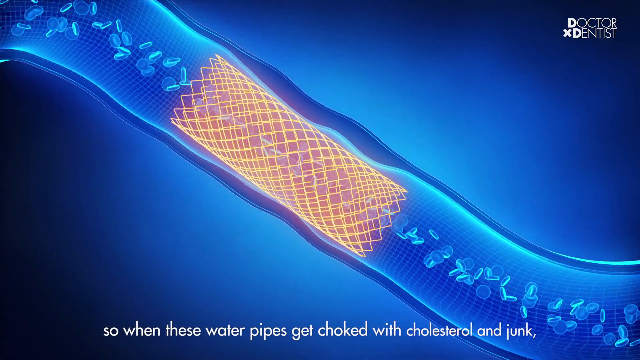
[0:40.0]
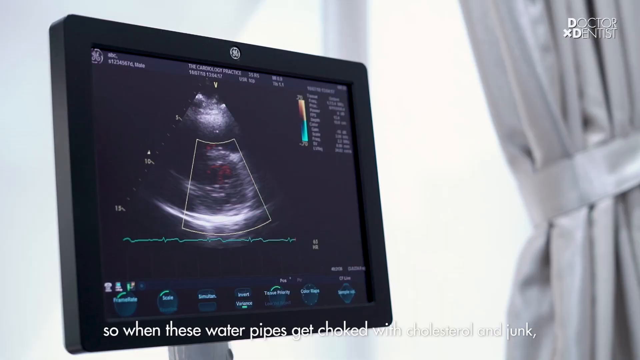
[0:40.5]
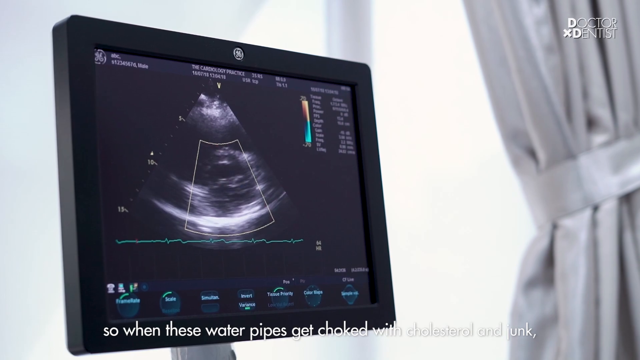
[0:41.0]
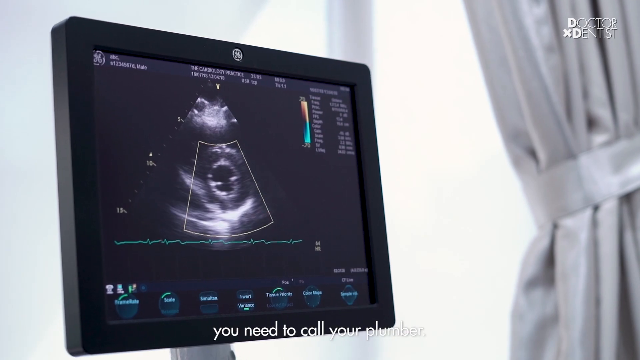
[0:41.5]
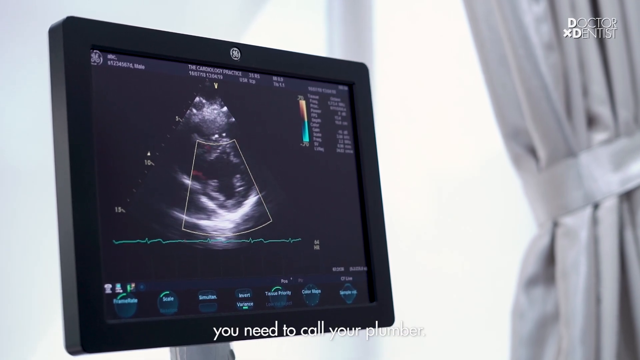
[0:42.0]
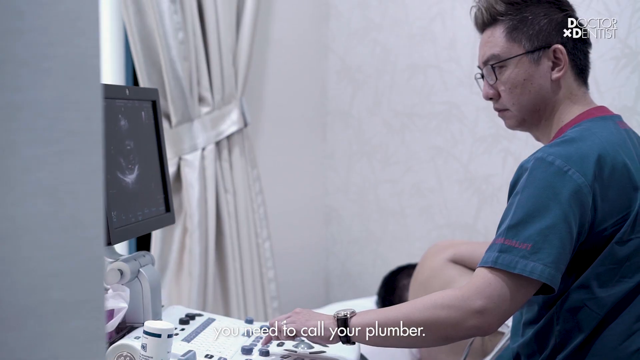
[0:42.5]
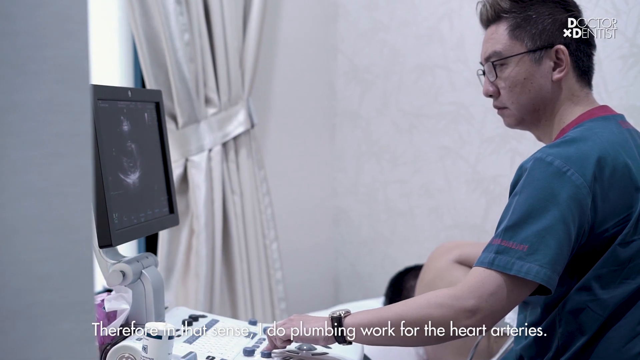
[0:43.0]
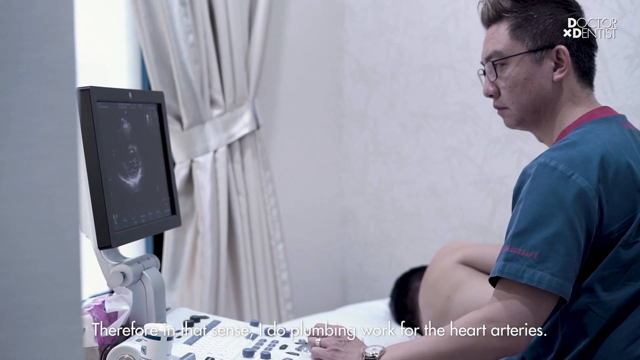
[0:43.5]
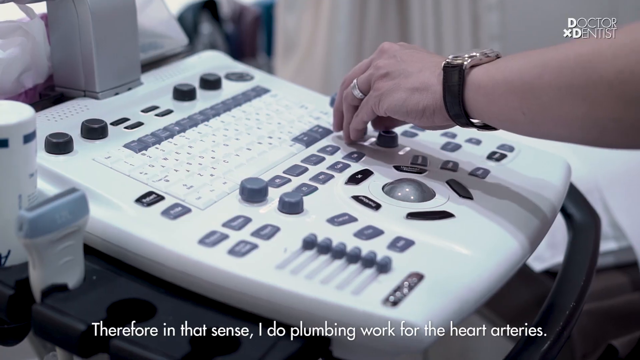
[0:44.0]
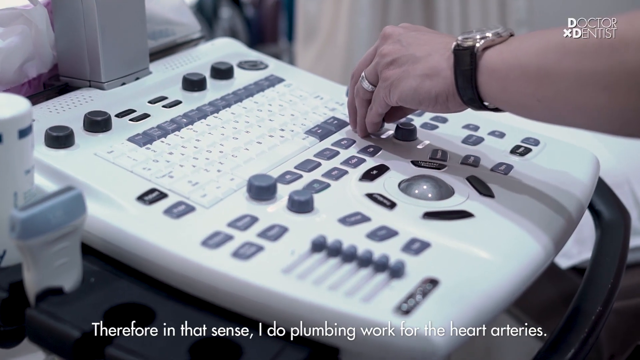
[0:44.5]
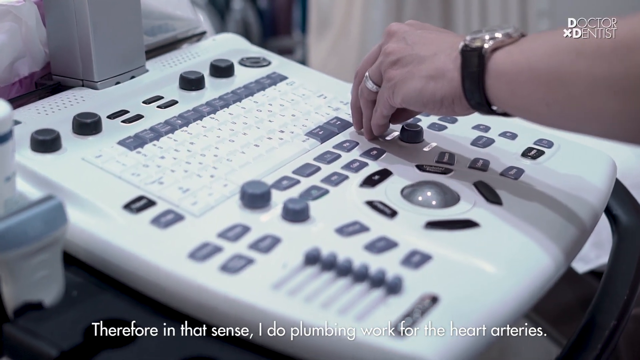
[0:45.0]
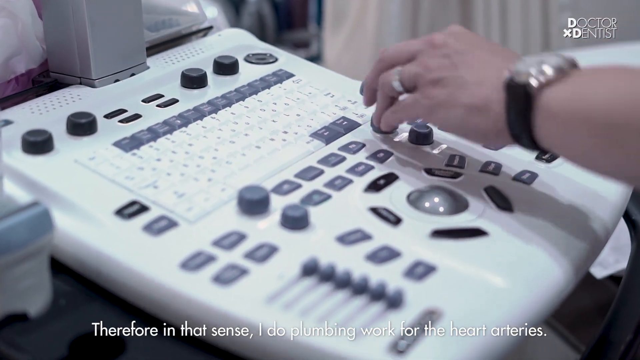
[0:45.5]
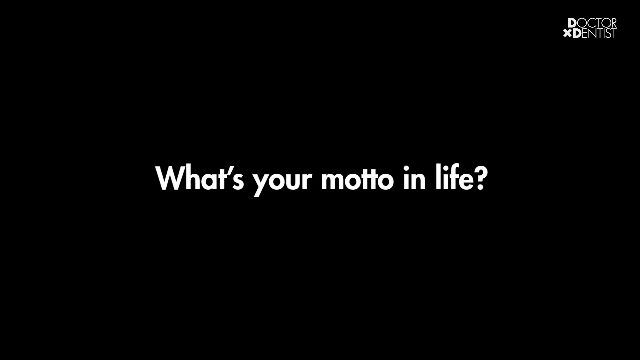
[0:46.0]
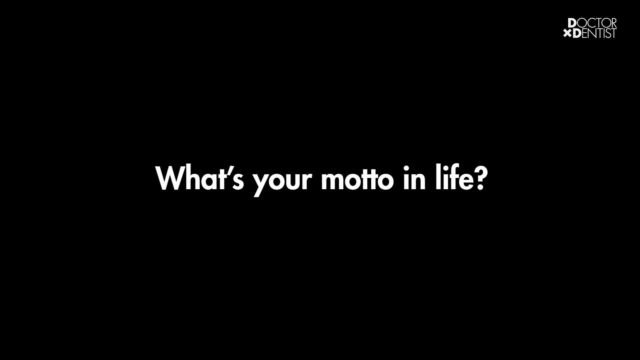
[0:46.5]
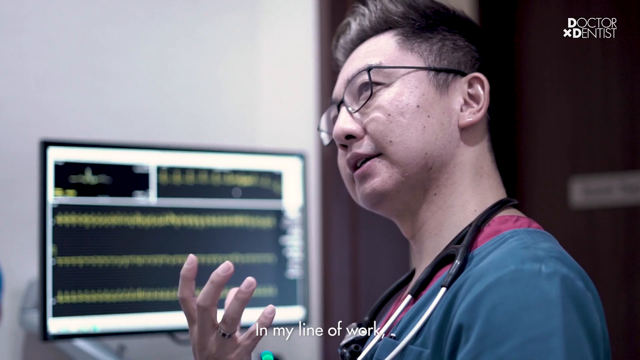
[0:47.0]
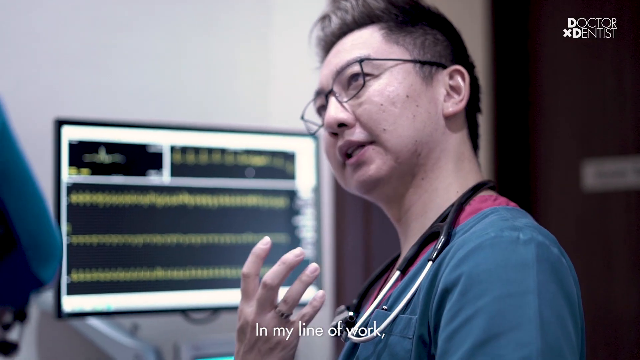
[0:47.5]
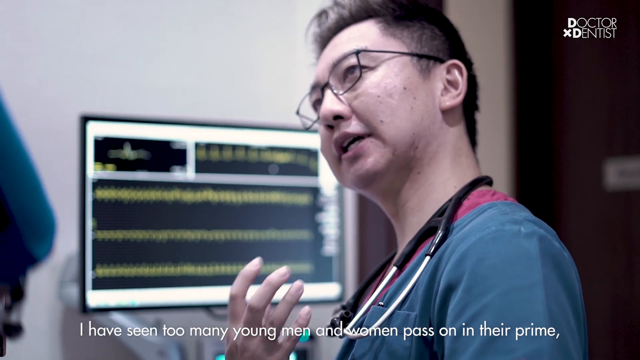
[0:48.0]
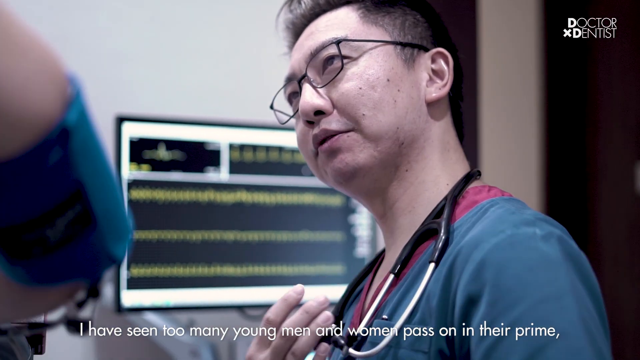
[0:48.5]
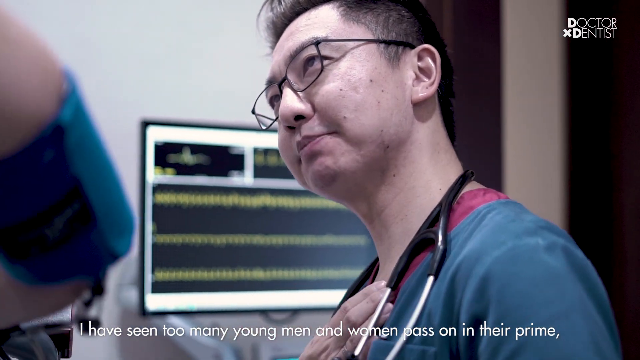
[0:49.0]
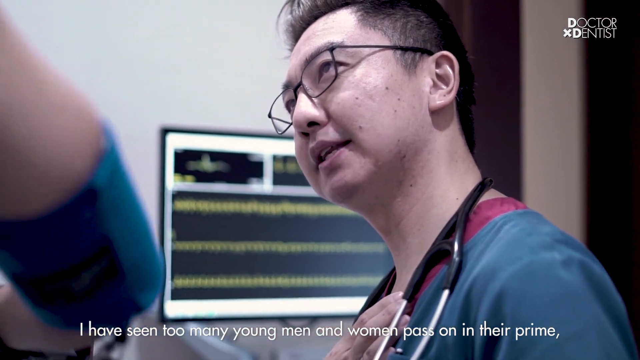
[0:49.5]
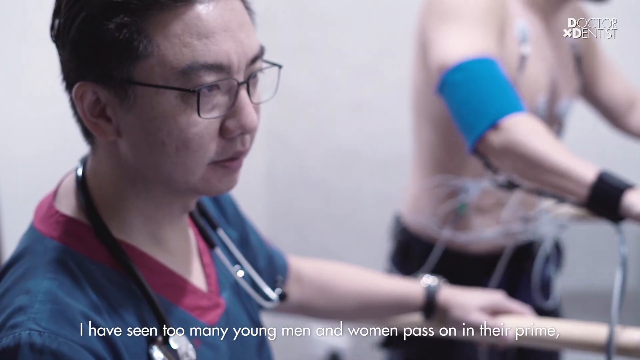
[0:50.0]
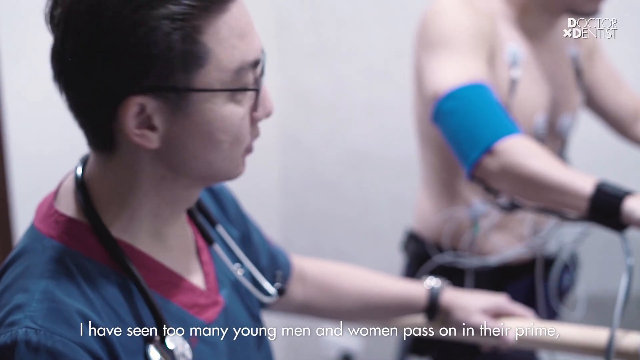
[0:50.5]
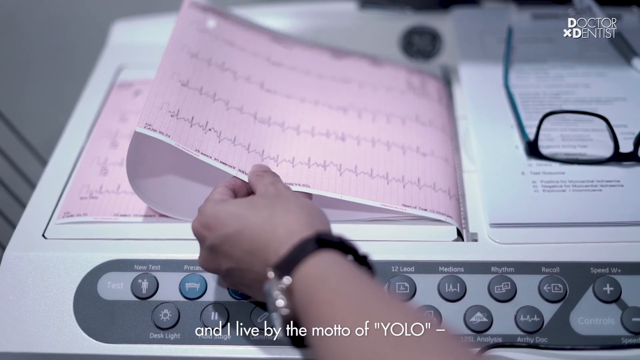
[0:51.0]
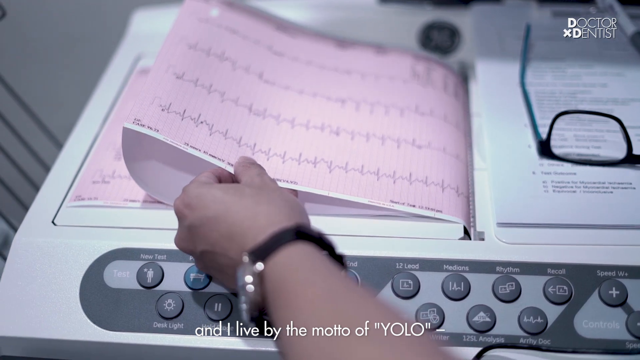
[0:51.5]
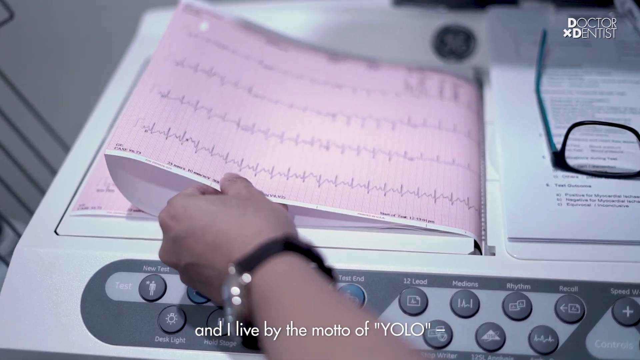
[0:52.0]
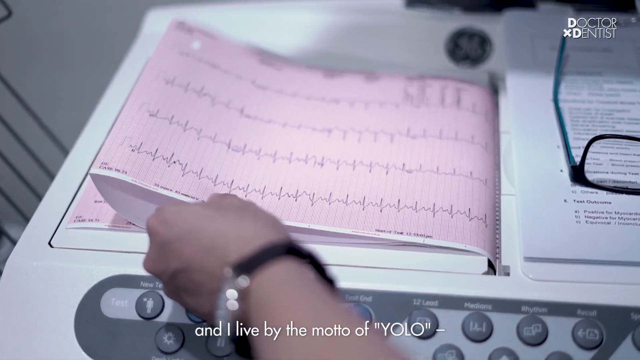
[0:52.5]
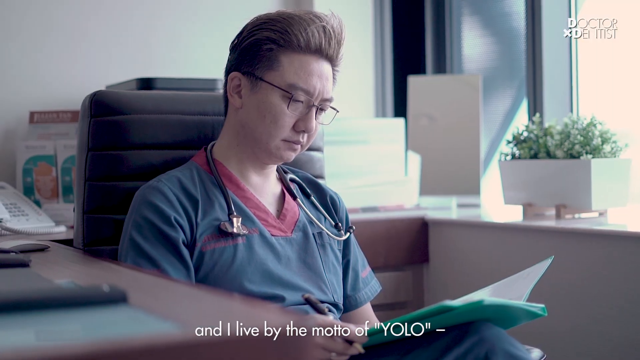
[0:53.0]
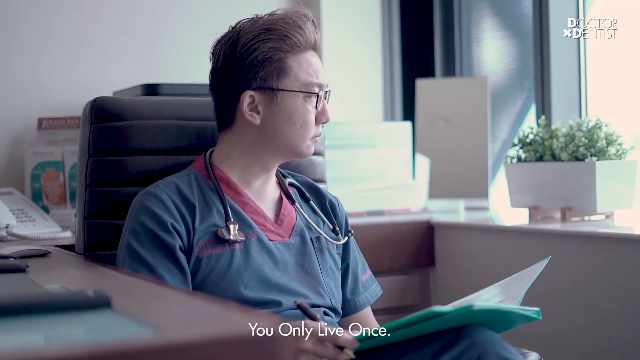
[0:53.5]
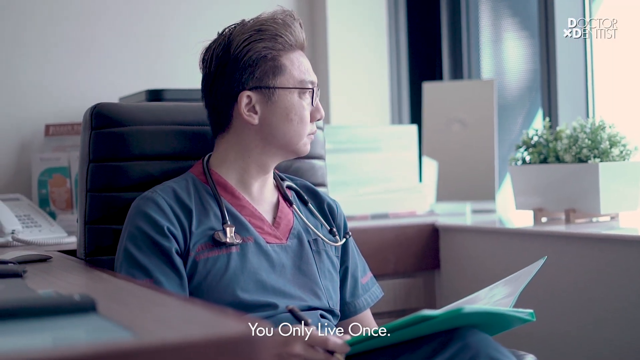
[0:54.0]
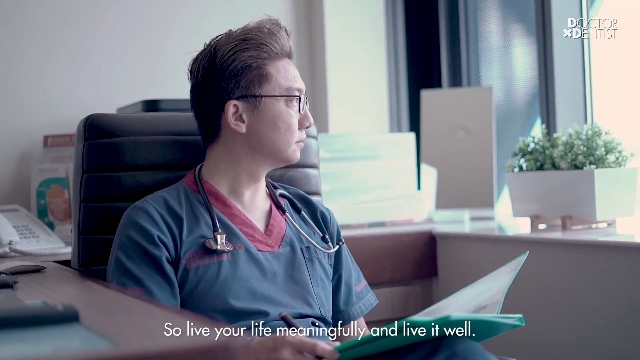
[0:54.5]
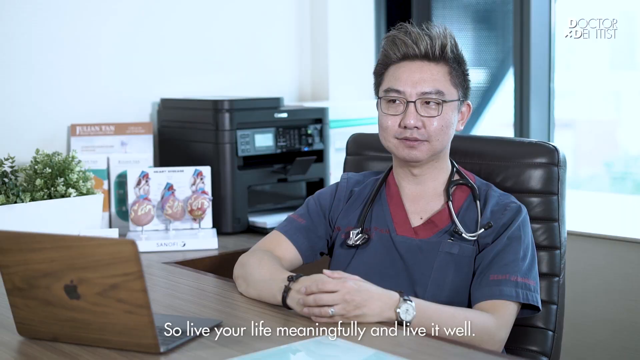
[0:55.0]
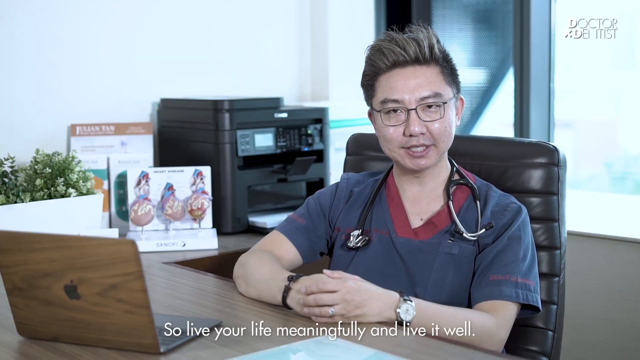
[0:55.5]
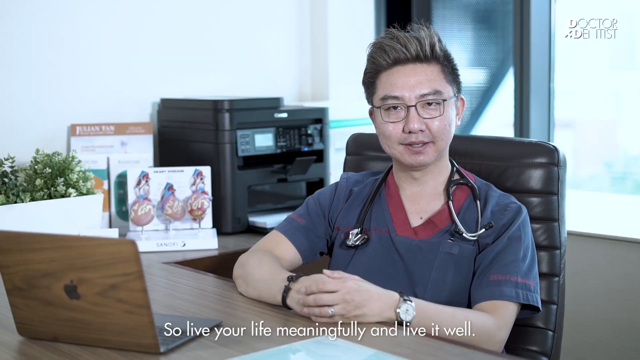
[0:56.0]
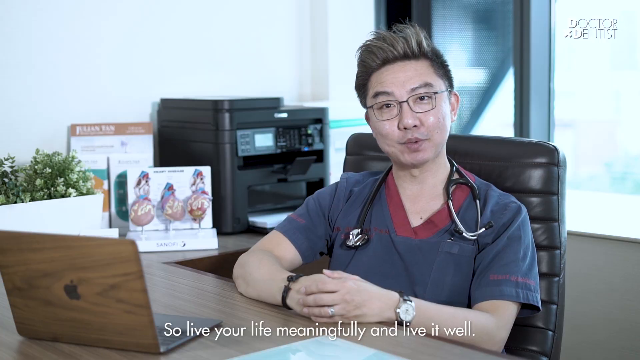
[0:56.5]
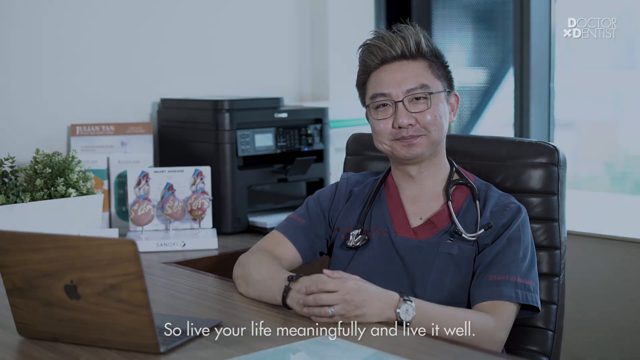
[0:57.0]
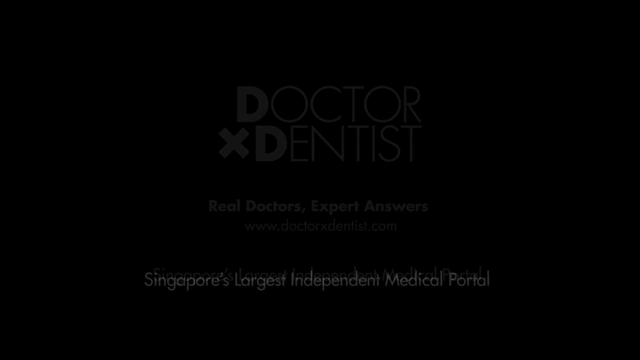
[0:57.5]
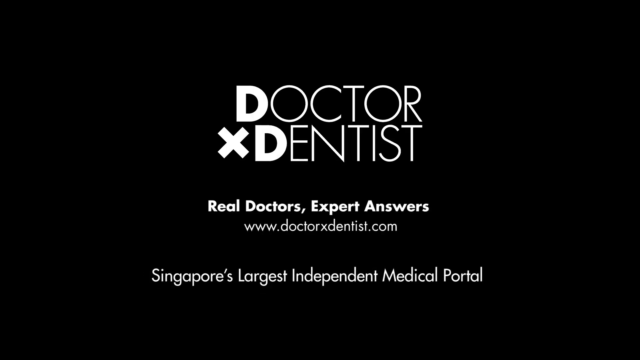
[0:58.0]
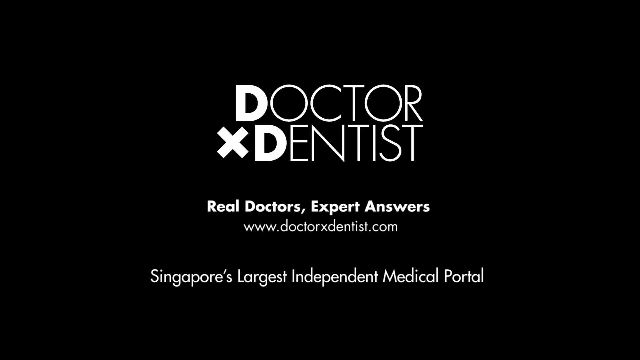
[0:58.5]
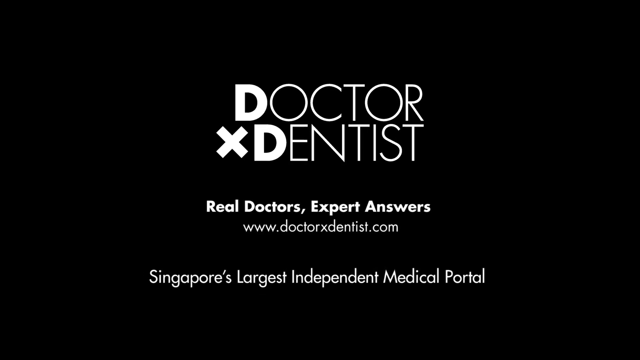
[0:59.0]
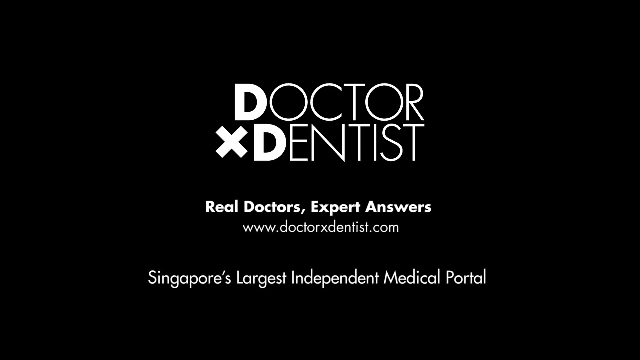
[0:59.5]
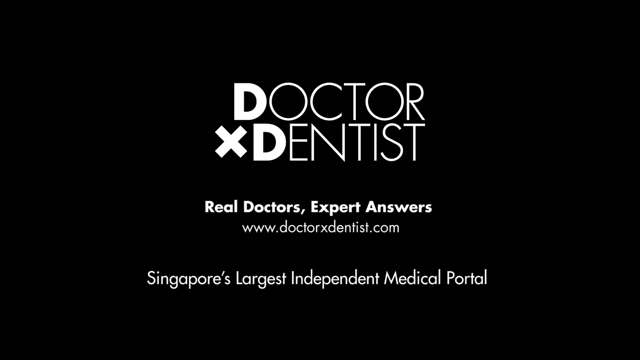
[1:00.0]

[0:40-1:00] The objects continue moving through the cord in the x-ray view, then the video cuts to what looks like an ultrasound. Dr. Julian Tan uses the ultrasound machine, moving knobs on it to see pictures from different angles. The patient being scanned appears to be male; he has no shirt on and is lying down turned away, so only the top of his back is visible. The screen then reads "what's your motto in life," and Dr. Julian Tan talks to someone, presumably answering the question. A patient walks on a treadmill, patched up with different cords connected to the treadmill and with a strap around one arm. The doctor stands at a printing machine as different pink papers print out of it, possibly data on the patient's heart rate during the treadmill test. Julian Tan looks at the papers at his desk and talks to the doctor or to the cameraman.